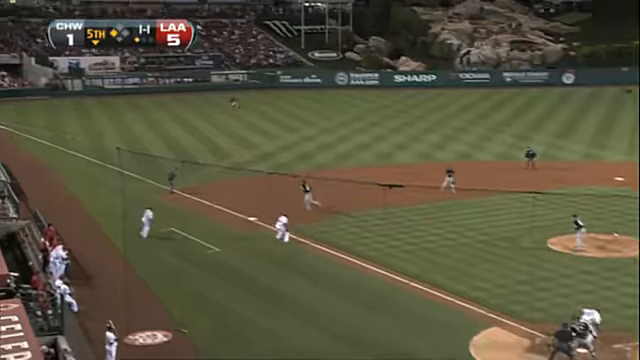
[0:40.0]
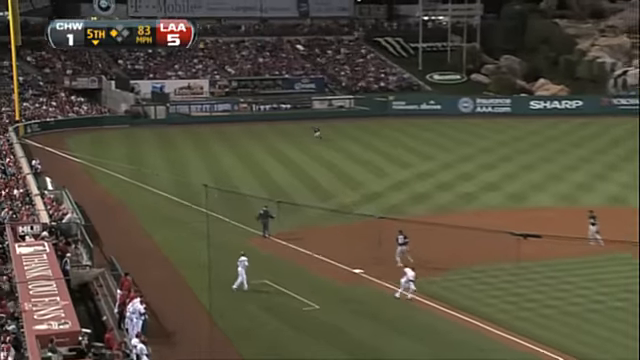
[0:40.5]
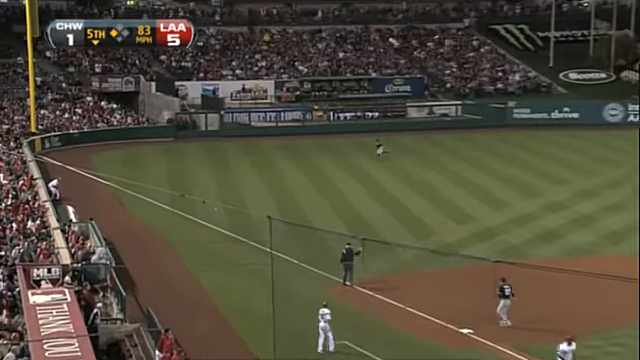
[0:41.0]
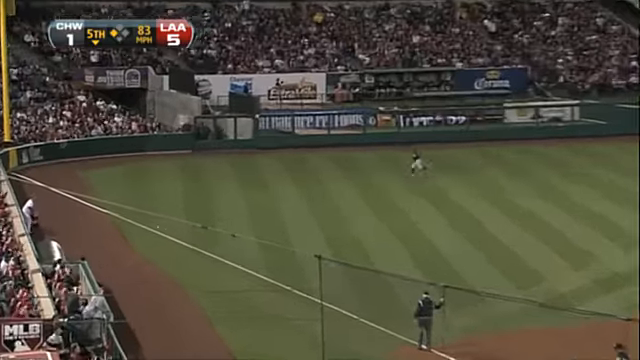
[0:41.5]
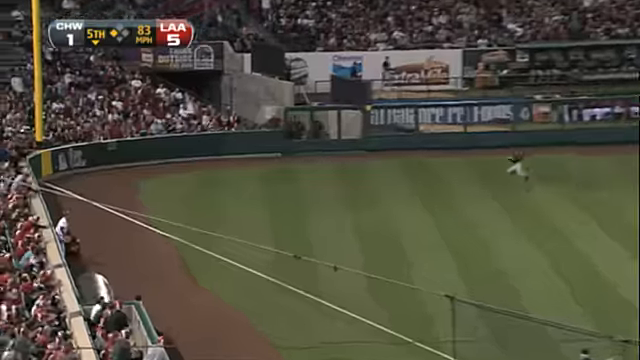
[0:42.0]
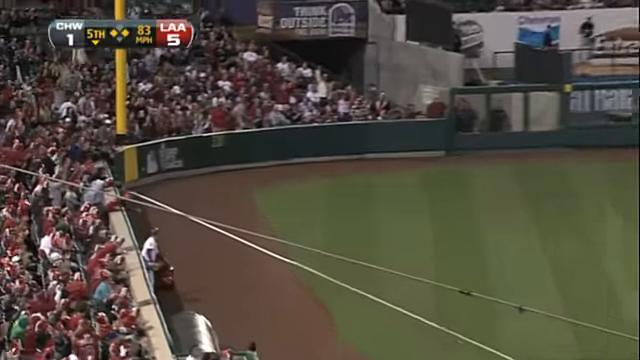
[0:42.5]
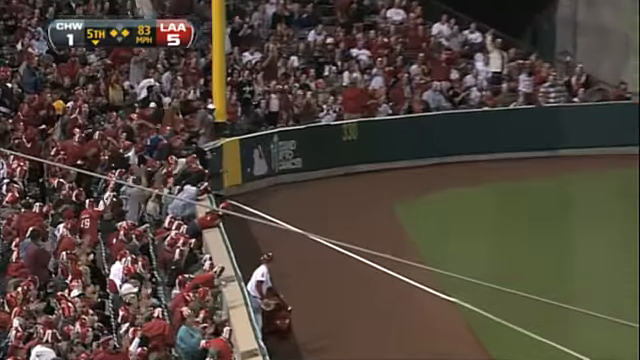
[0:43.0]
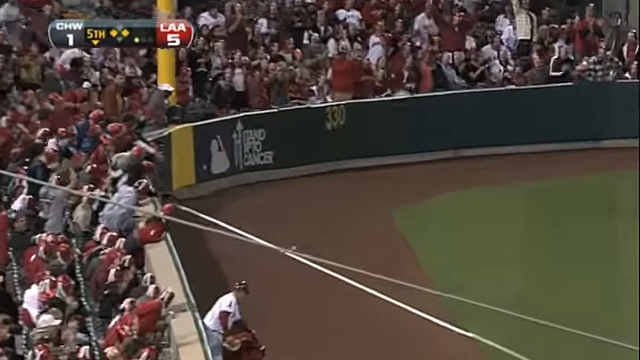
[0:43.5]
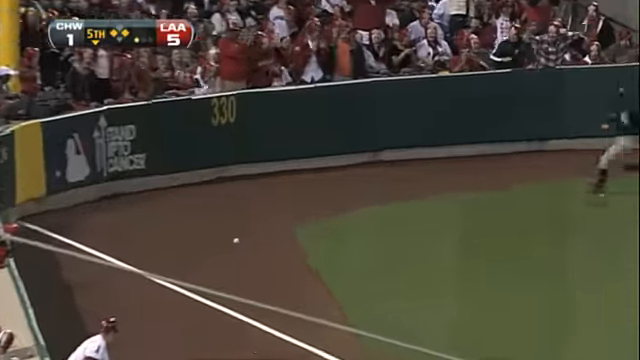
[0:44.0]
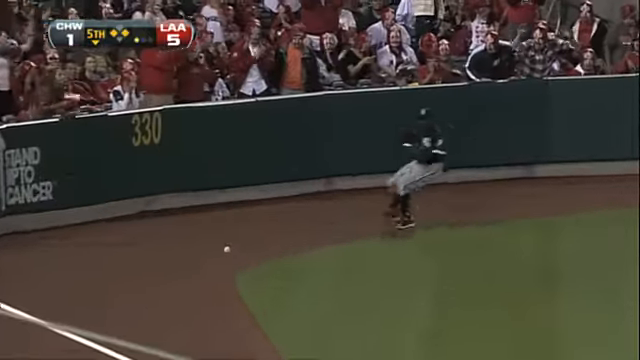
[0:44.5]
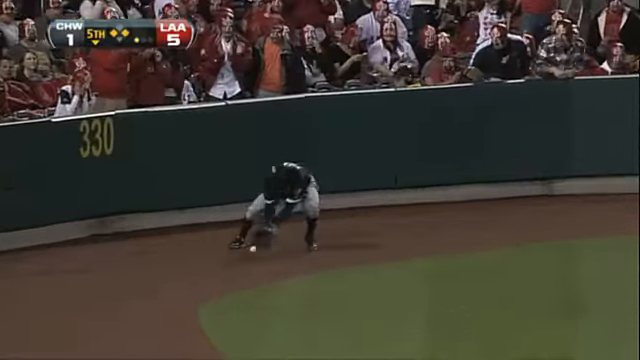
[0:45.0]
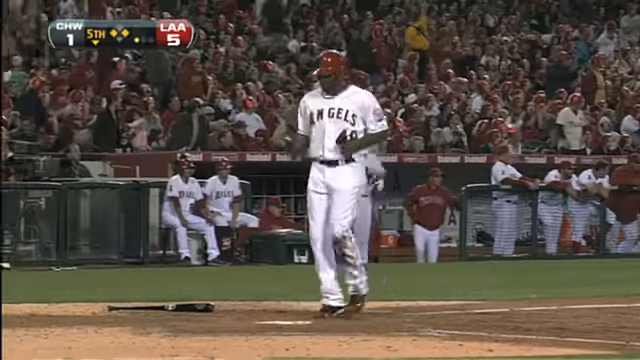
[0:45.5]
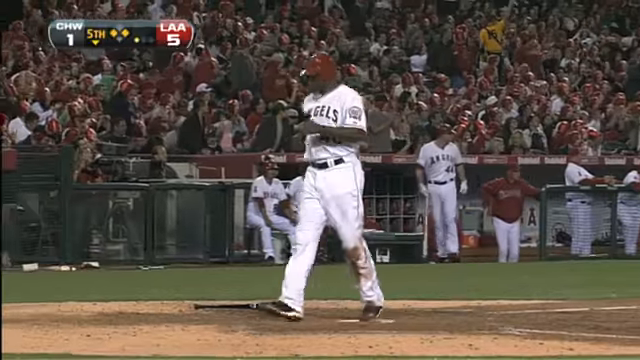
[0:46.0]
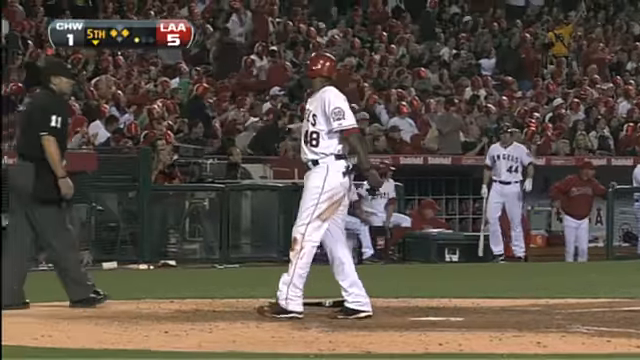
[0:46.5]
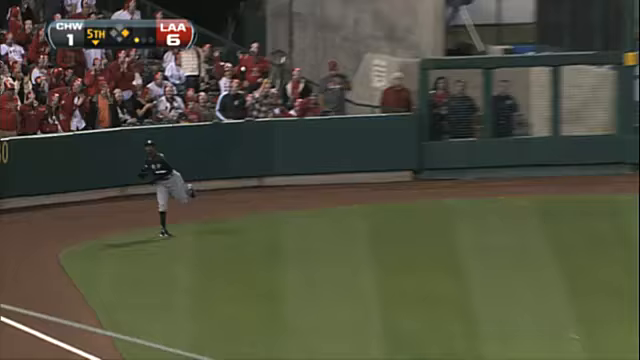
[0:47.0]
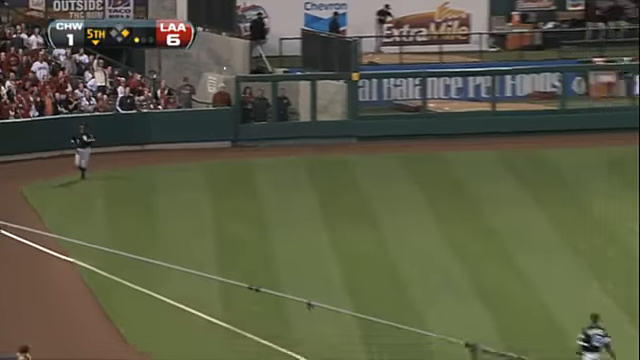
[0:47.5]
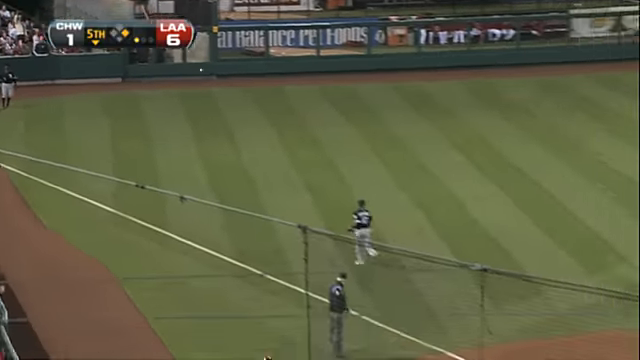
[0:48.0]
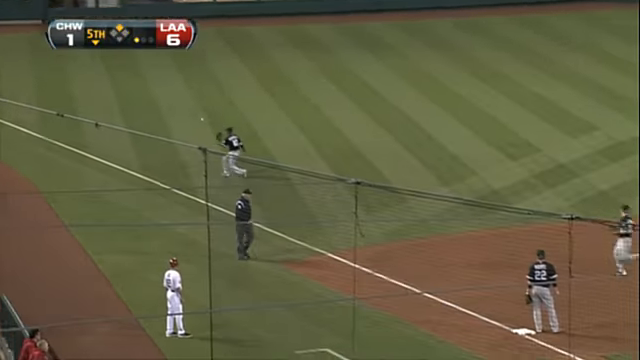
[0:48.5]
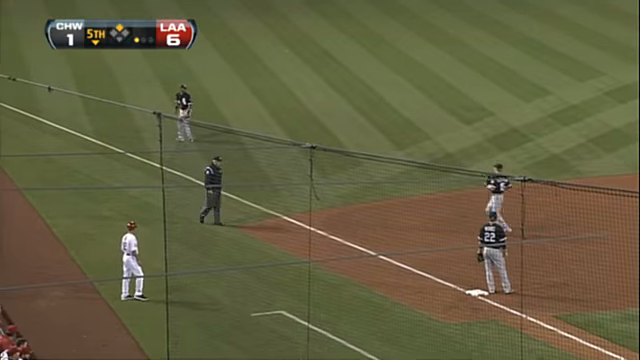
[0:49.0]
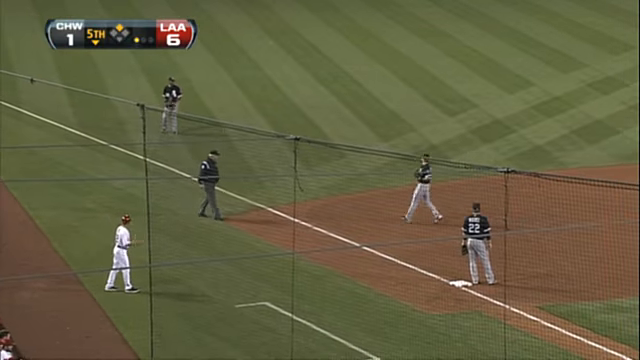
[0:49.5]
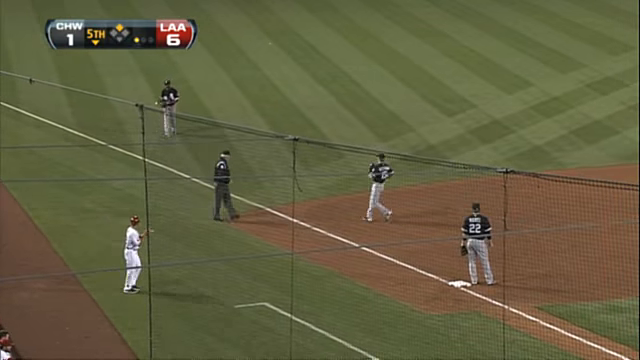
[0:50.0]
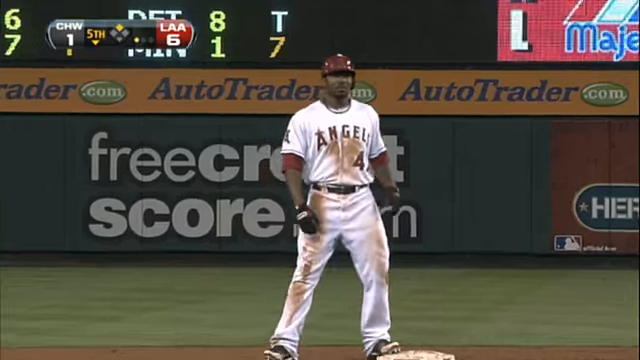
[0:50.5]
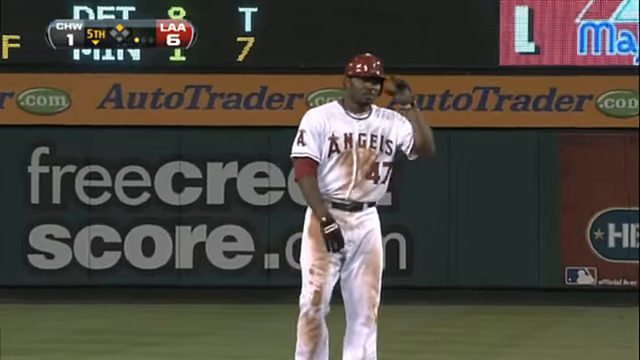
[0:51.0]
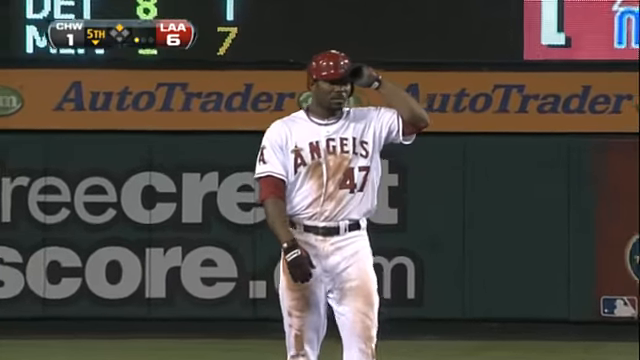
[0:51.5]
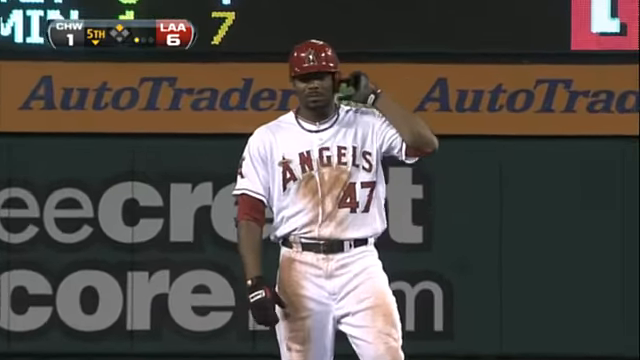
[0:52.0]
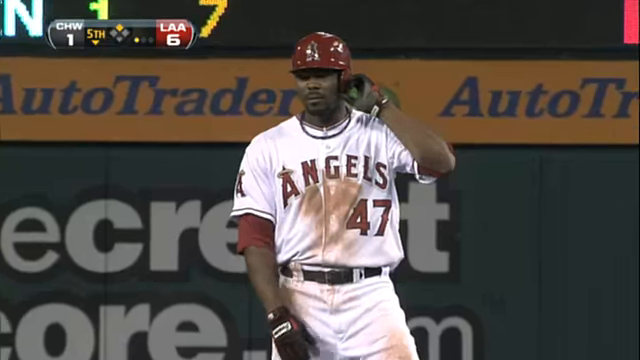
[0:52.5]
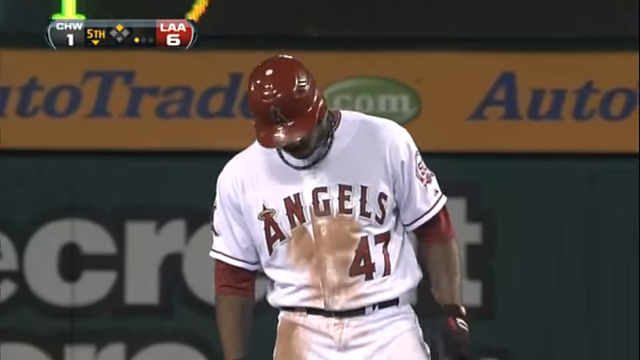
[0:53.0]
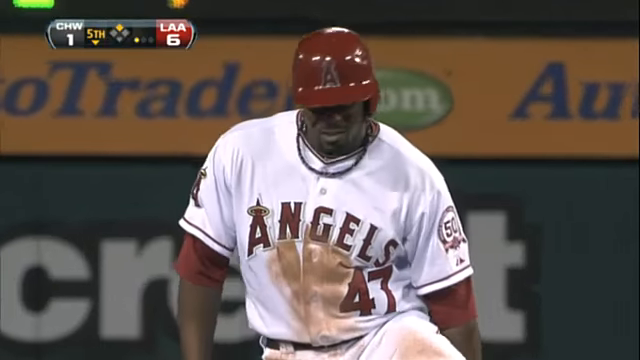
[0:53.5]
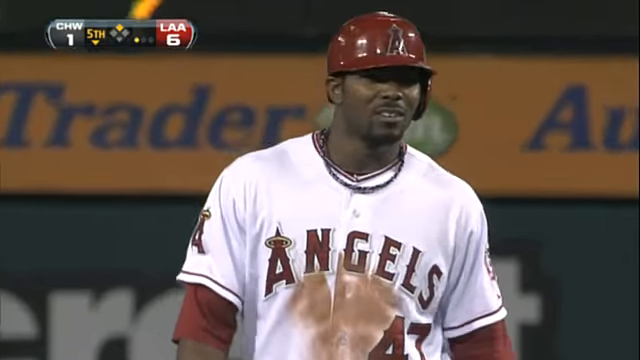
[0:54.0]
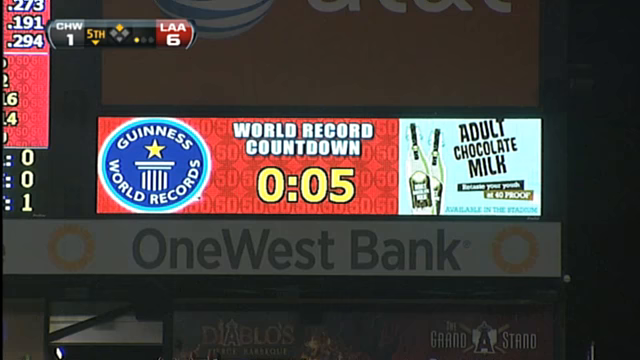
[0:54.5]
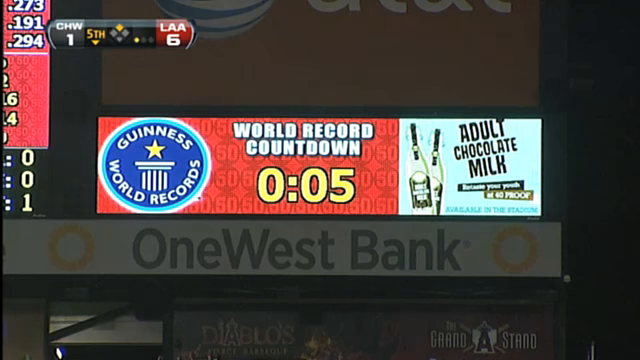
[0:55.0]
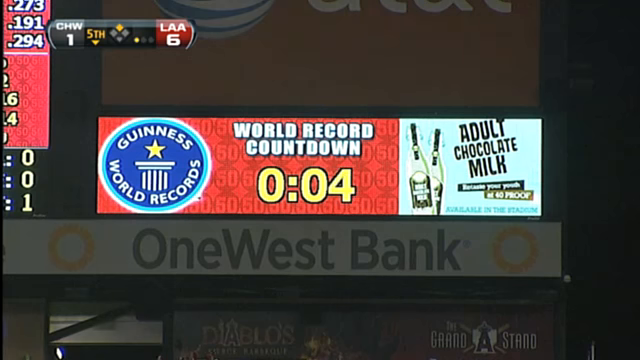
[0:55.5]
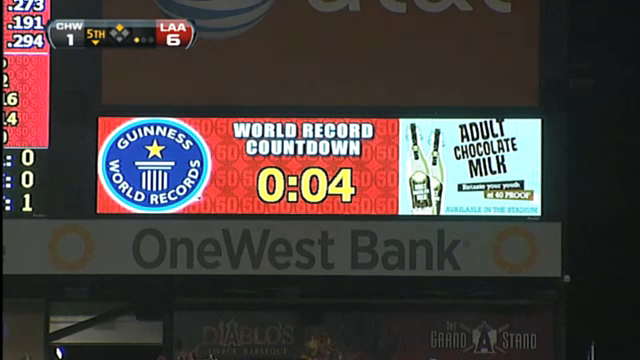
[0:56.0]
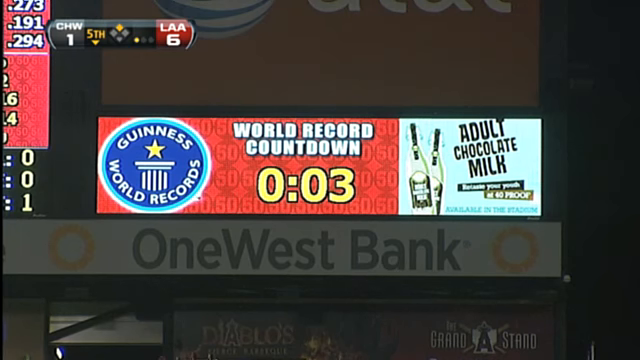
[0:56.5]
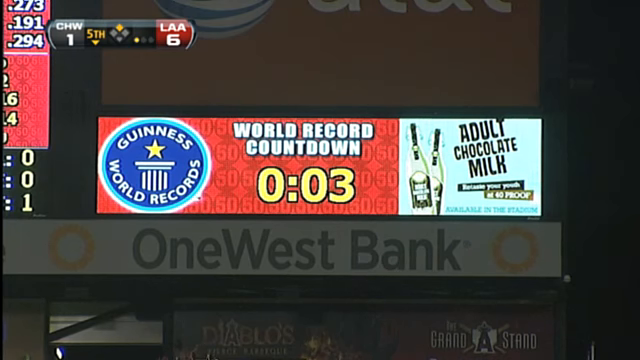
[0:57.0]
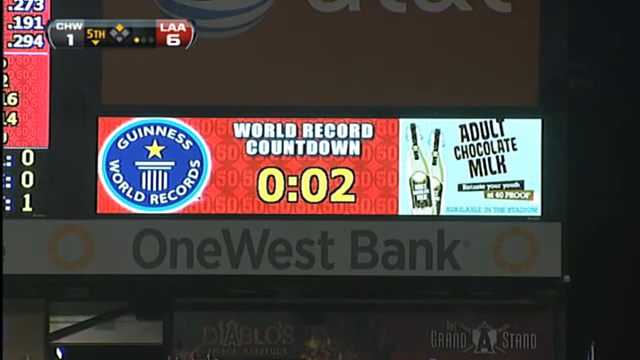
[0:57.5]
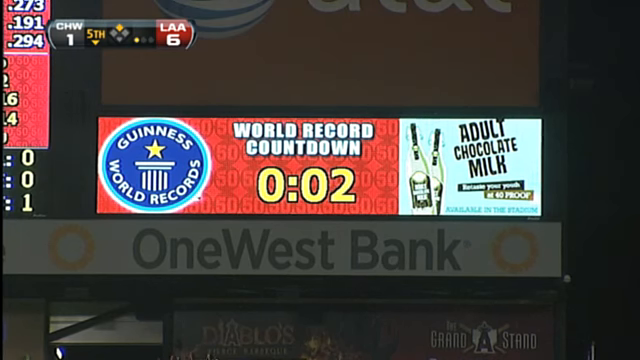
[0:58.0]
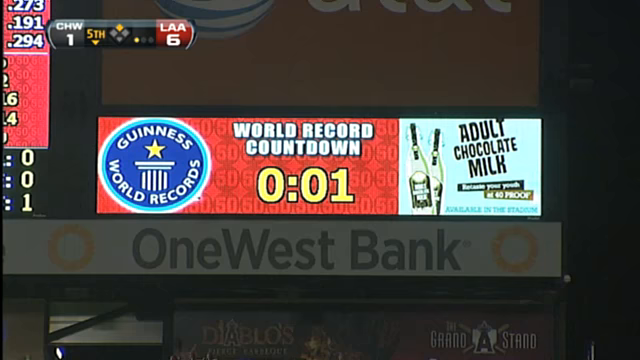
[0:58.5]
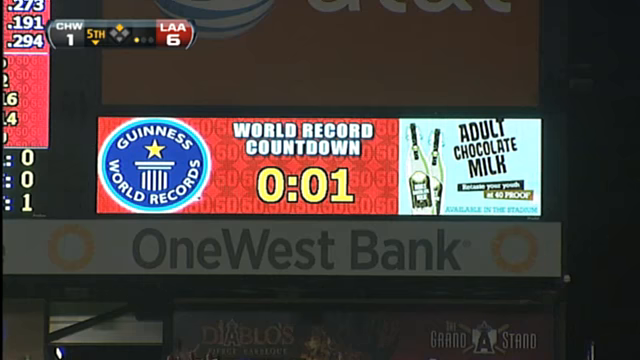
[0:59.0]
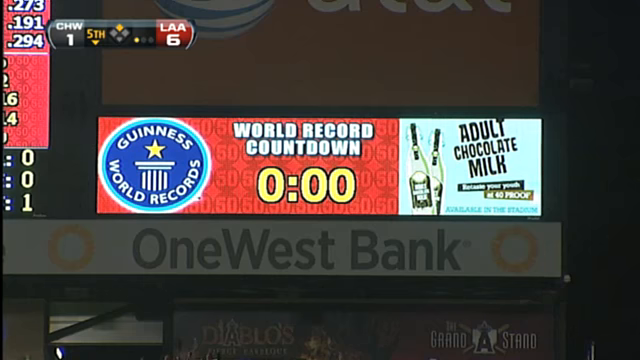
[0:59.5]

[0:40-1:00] At a Major League Baseball night game, a box score in the upper left-hand corner of the screen shows the Chicago White Sox with one run and the Los Angeles Angels with five runs. It is the bottom of the fifth inning, there is a man on third, and the Angels are at bat. The batter hits the ball and drives it into left field down the third baseline. The outfielder throws the ball back into the infield, a run scores, and the game is now six to one in favor of the Angels. The camera then shifts to a display in the outfield with a Guinness World Records logo indicating "world record countdown"; it is at four seconds and counts down to zero. The Angels wear white uniforms, and the White Sox wear gray pants with black jerseys.